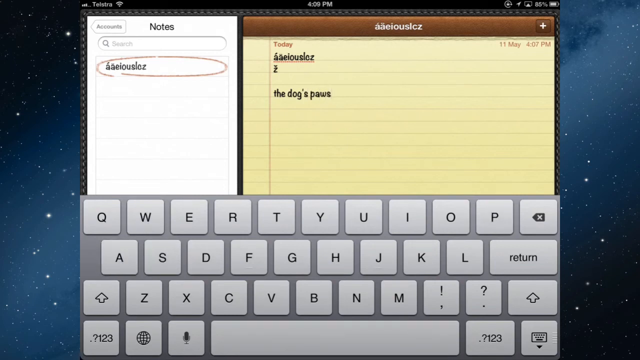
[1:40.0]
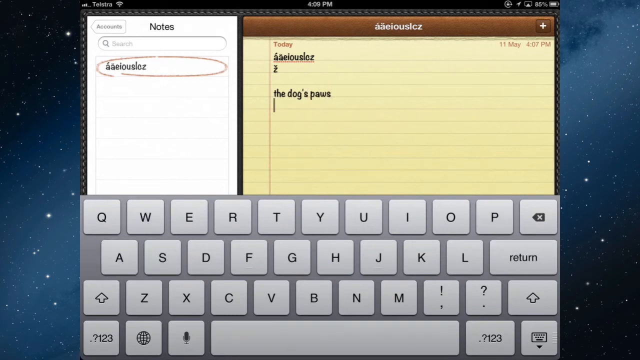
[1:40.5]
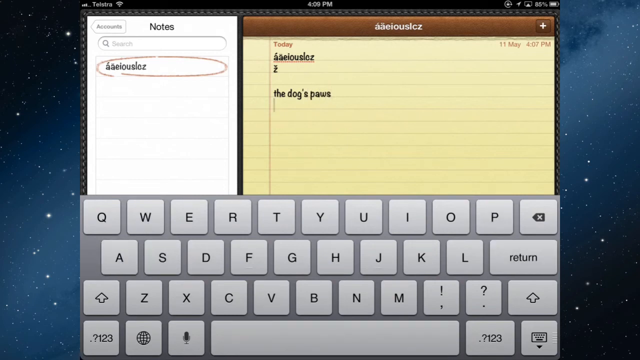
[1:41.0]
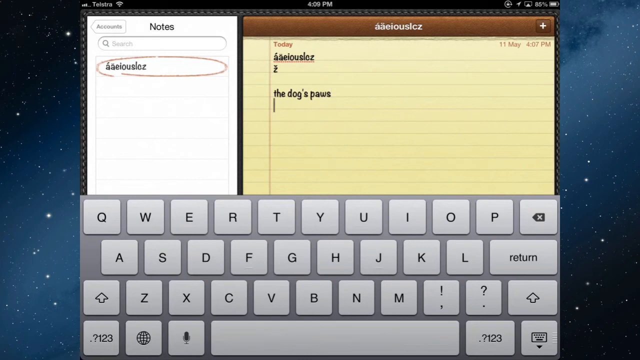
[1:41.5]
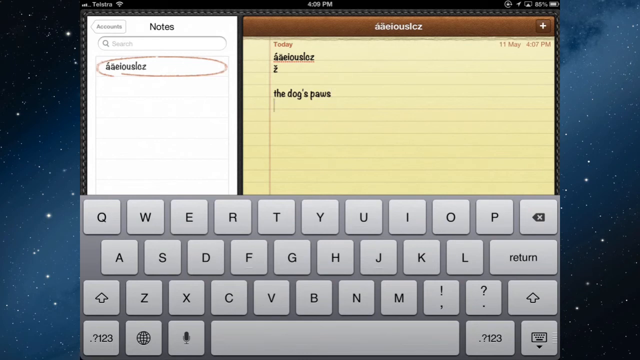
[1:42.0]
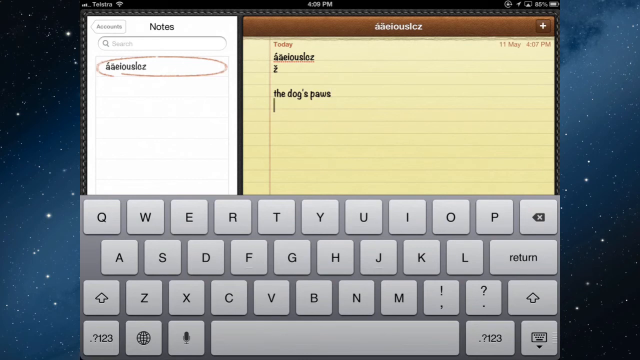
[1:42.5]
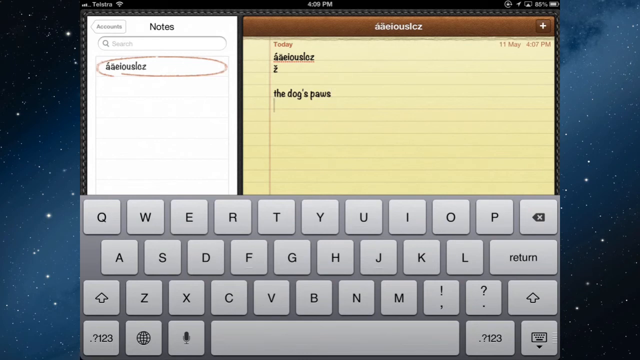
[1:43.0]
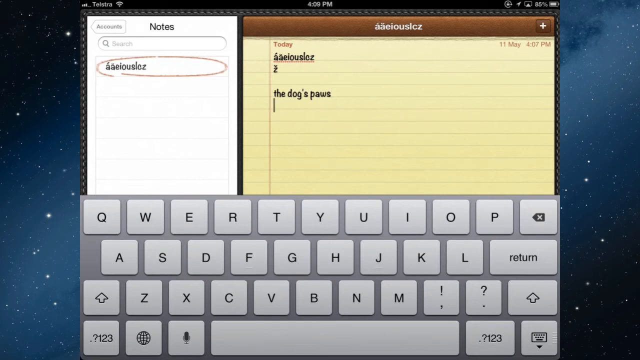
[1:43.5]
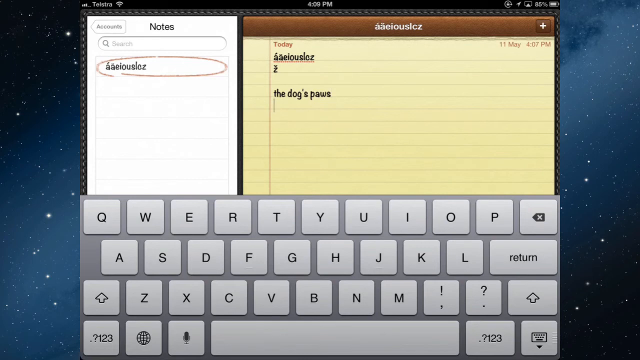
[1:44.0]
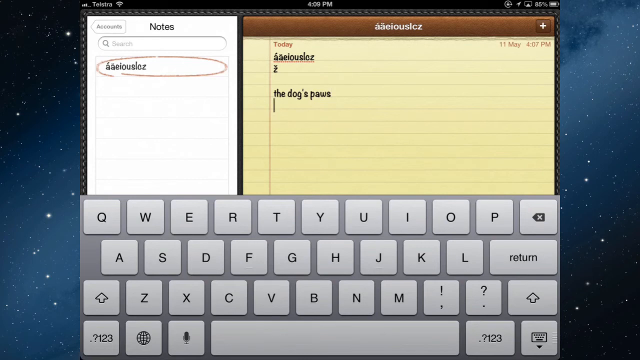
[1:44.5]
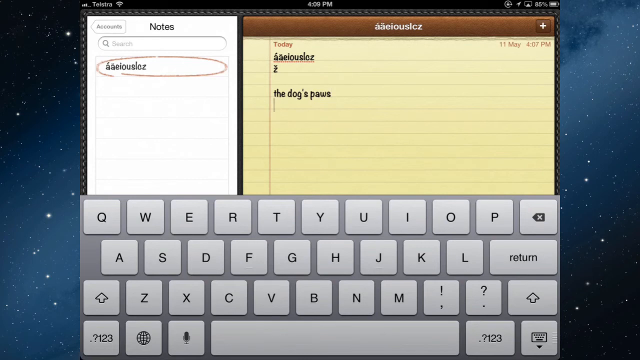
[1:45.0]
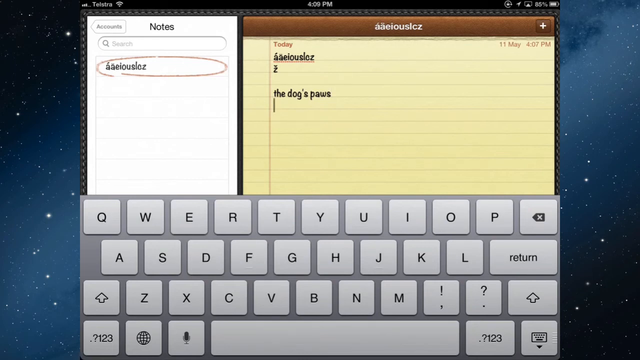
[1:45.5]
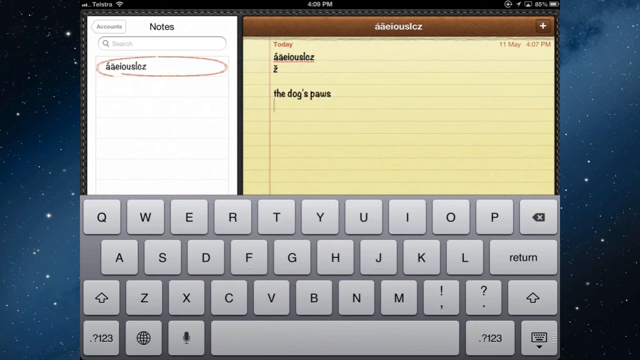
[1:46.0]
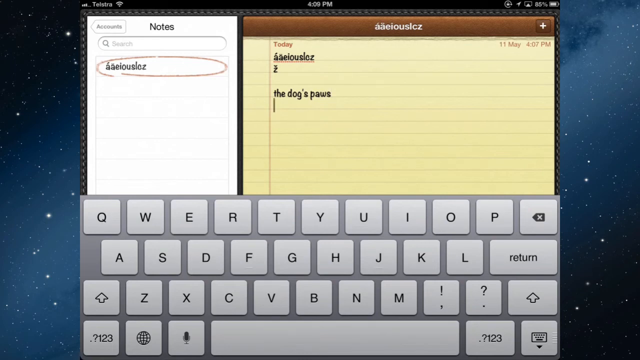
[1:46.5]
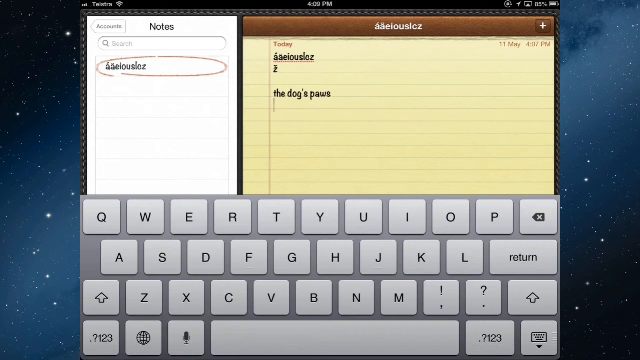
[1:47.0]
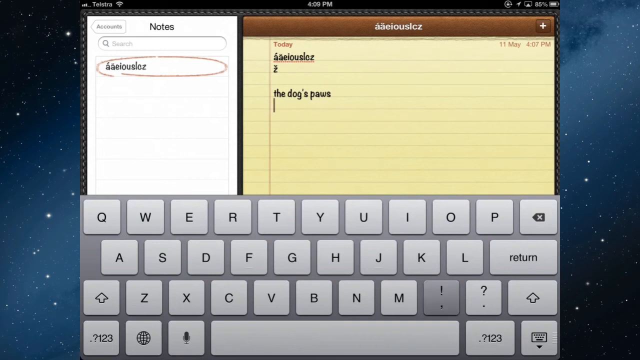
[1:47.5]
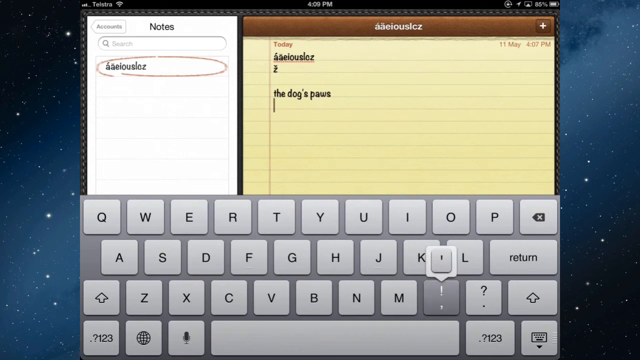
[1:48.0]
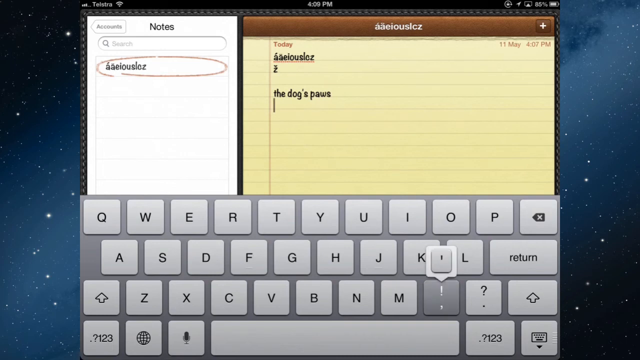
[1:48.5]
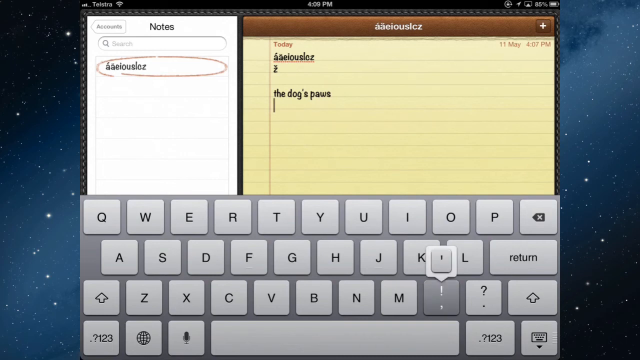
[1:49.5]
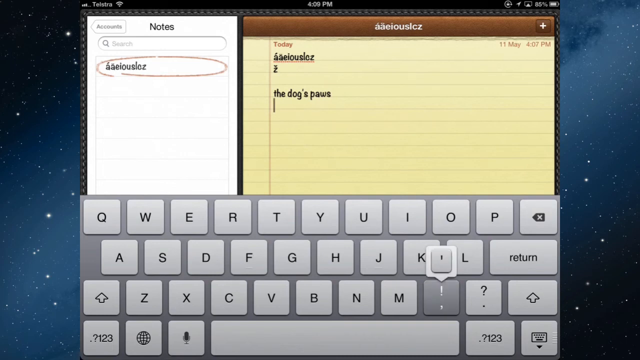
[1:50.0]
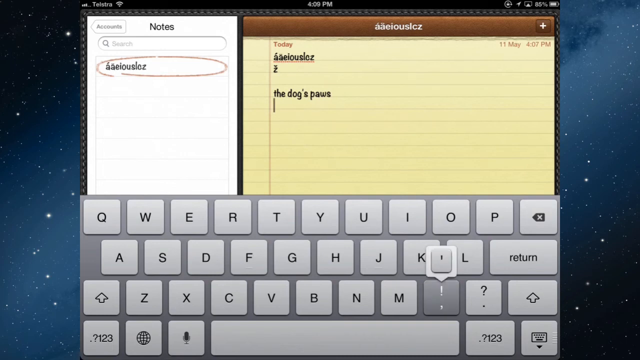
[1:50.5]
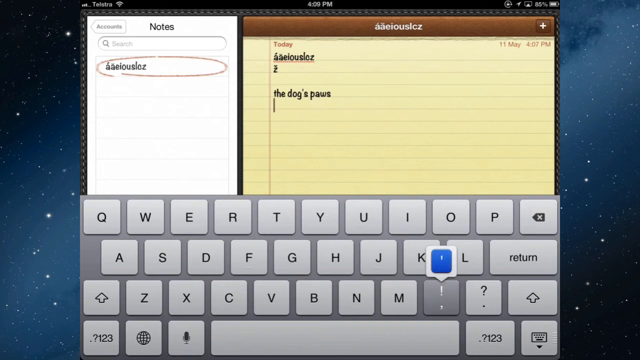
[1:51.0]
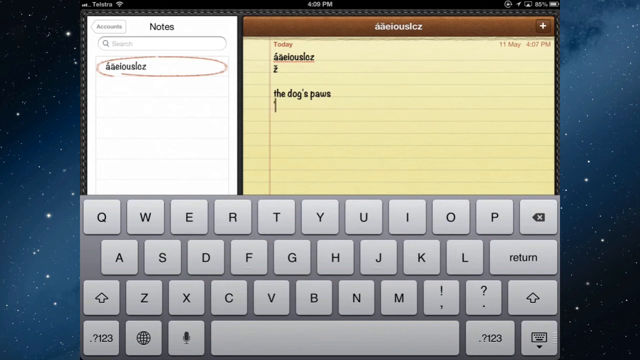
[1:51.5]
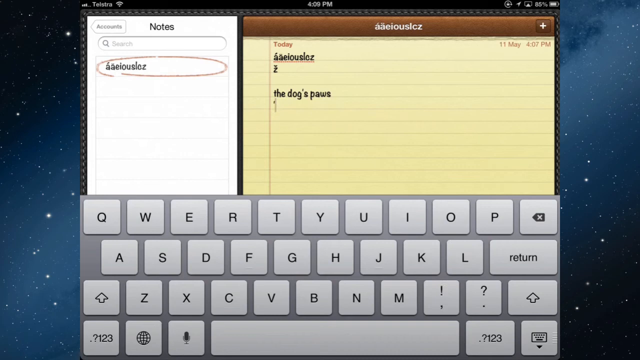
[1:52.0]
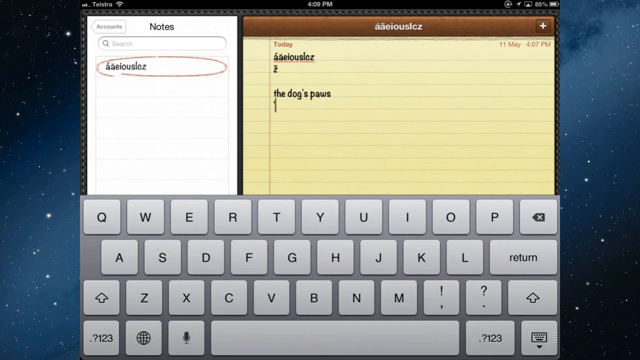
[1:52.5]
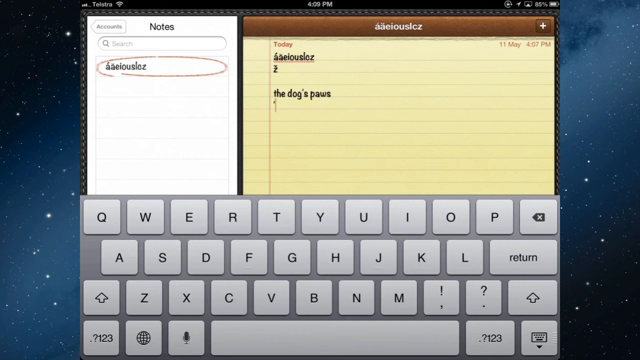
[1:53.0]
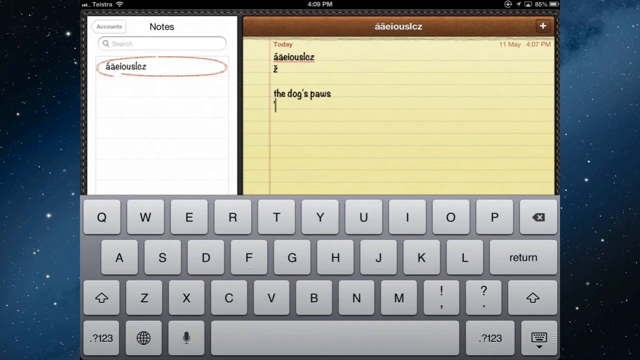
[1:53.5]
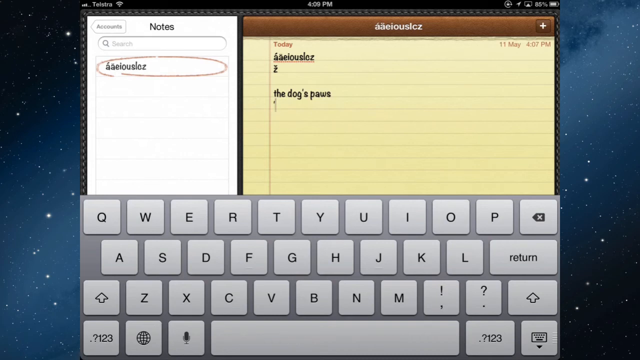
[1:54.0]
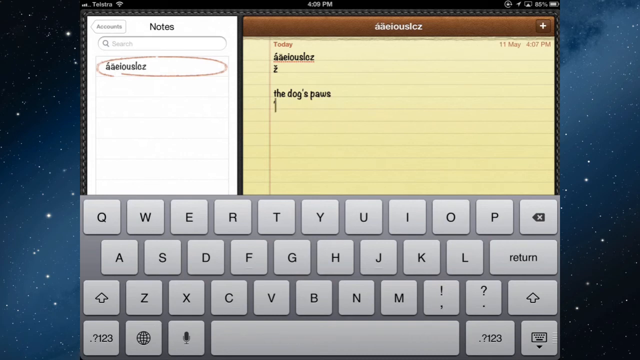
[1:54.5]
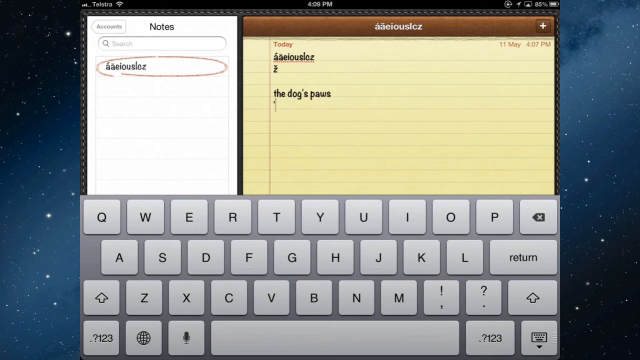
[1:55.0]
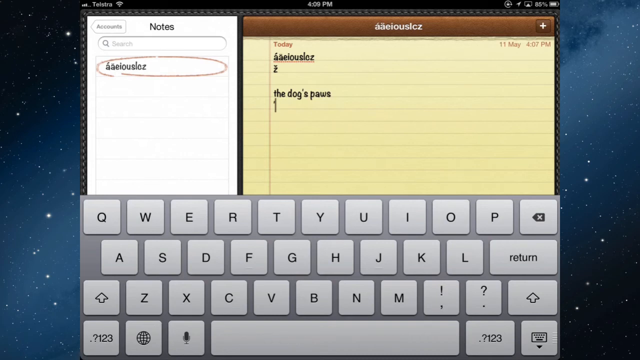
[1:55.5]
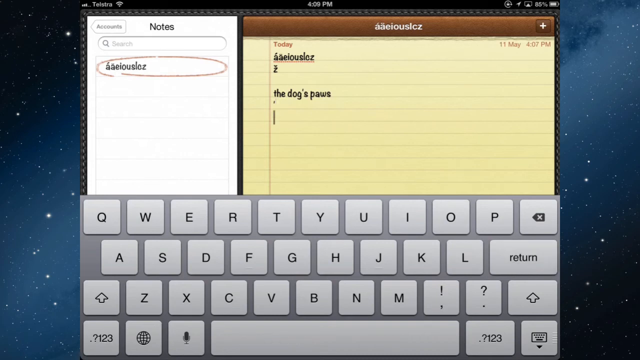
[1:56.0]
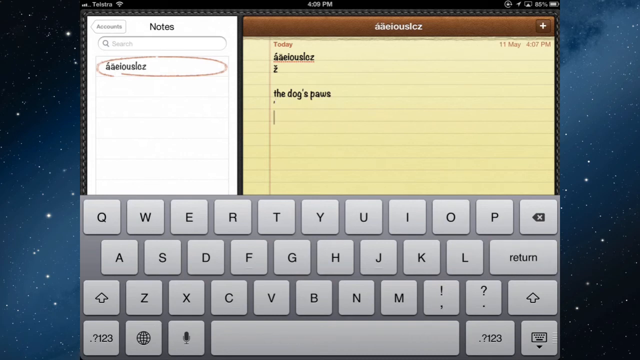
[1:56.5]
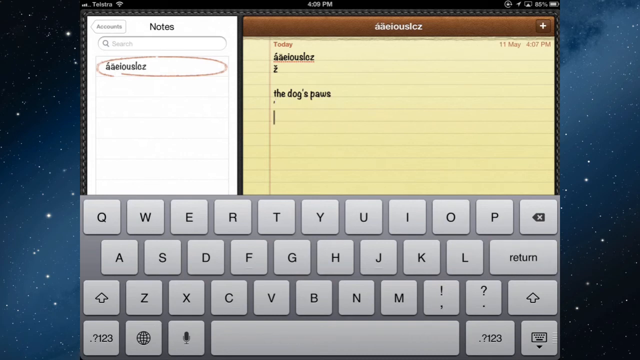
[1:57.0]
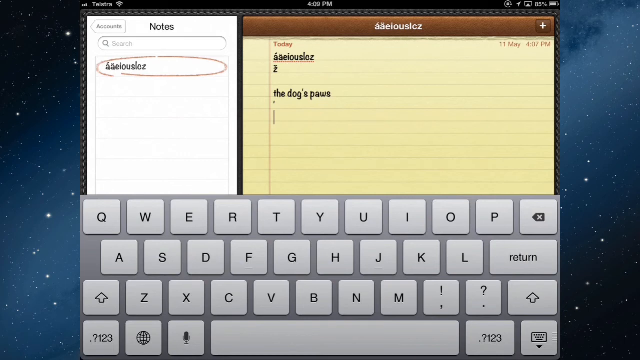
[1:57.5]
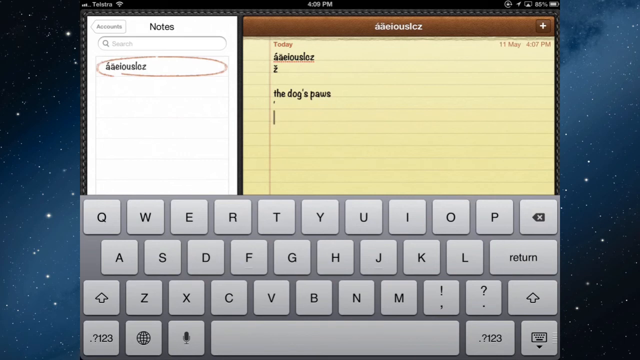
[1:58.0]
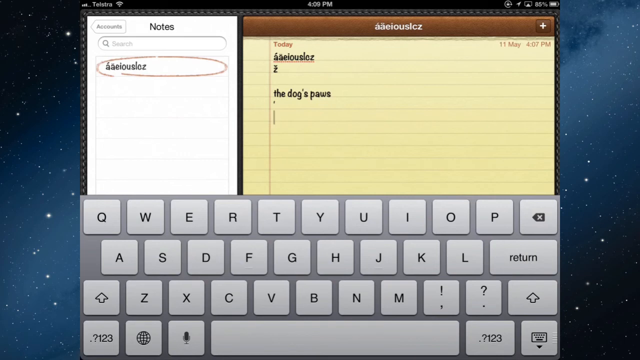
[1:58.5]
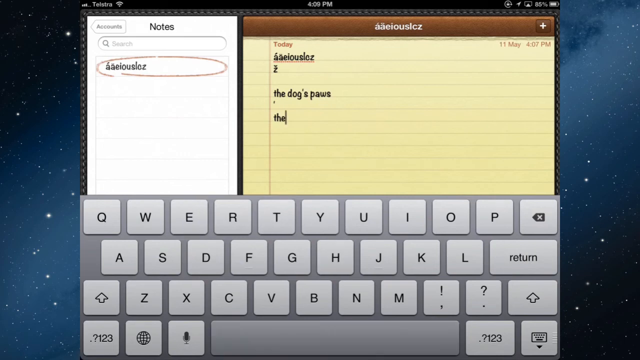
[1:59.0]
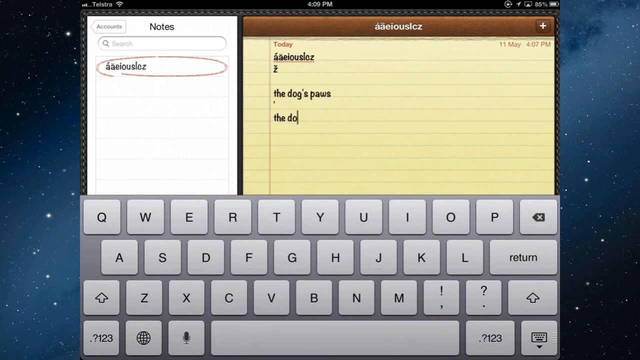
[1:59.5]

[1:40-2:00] A computer-generated notepad with yellow pages and a brown top border is shown; the border seems to have white text on or in front of it. Underneath, "today" appears in brown, the top right corner shows the date and the time, and below that the letters being typed come out in black. On the left is a smaller notepad with white pages and "notes" in black text at the top, and a gray keyboard is at the bottom of the screen. The user seems to click the exclamation point, and a key pops up above it that turns blue. The user then types something on the keyboard and it appears on the yellow notepad, reading "the dog."